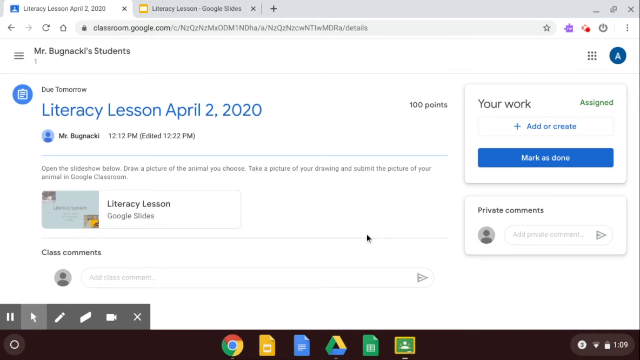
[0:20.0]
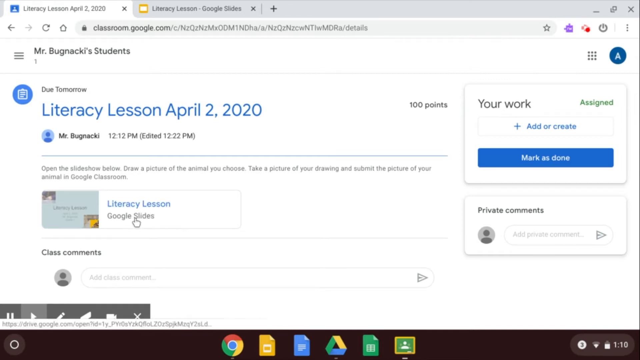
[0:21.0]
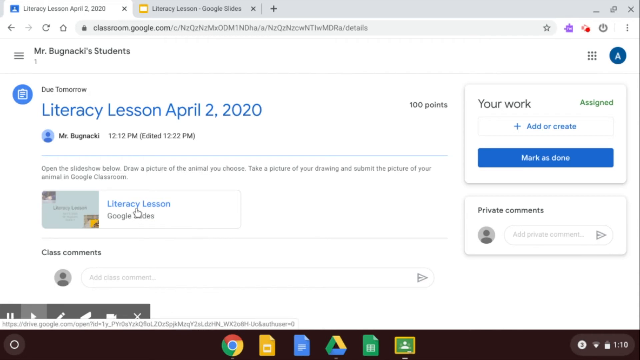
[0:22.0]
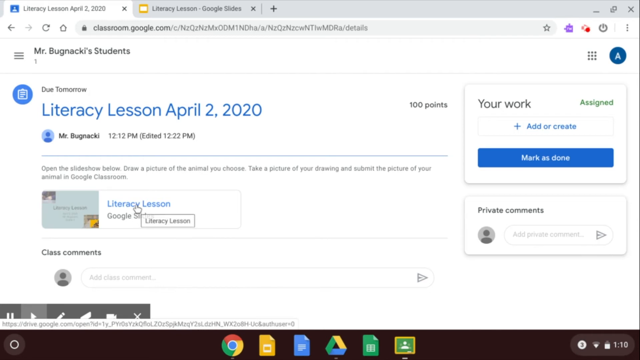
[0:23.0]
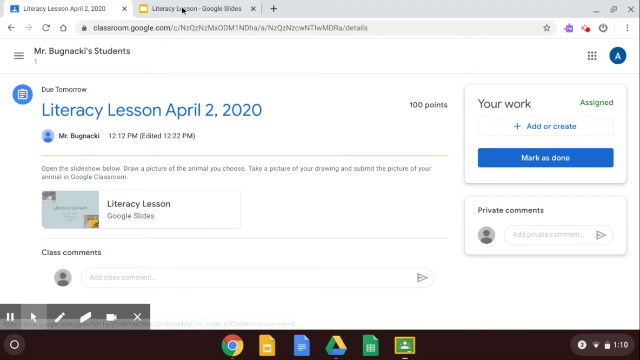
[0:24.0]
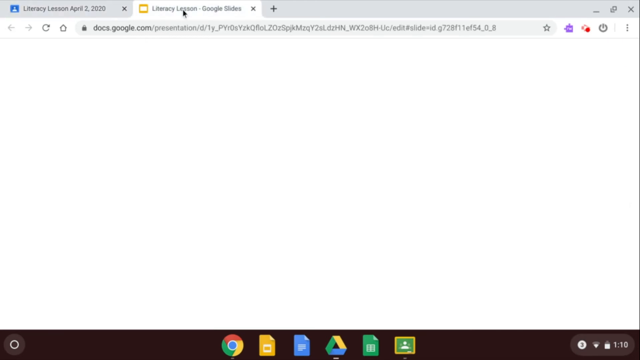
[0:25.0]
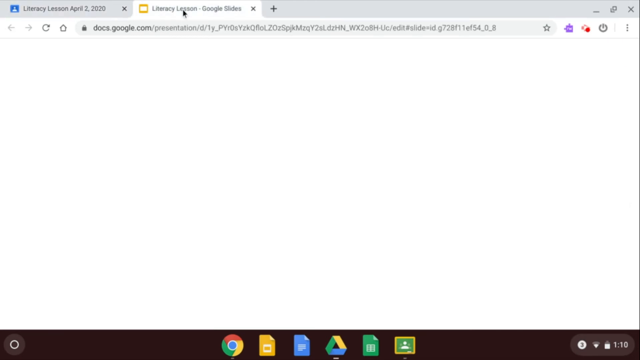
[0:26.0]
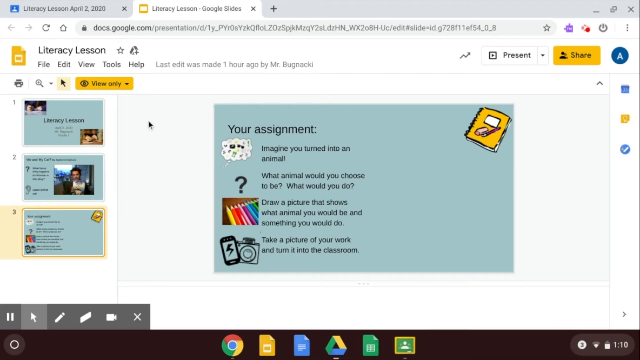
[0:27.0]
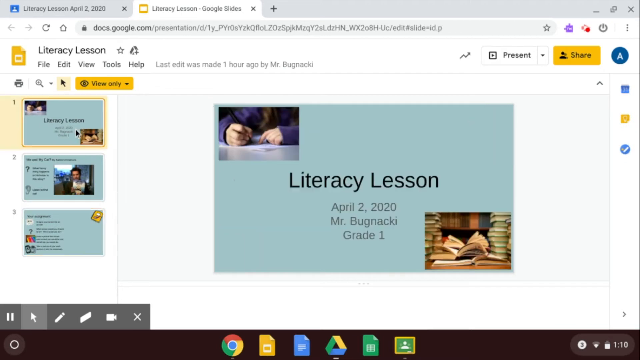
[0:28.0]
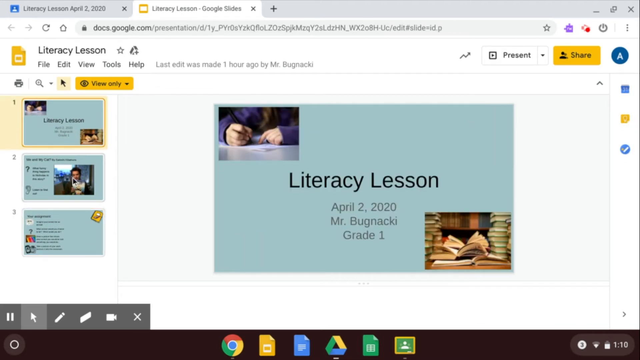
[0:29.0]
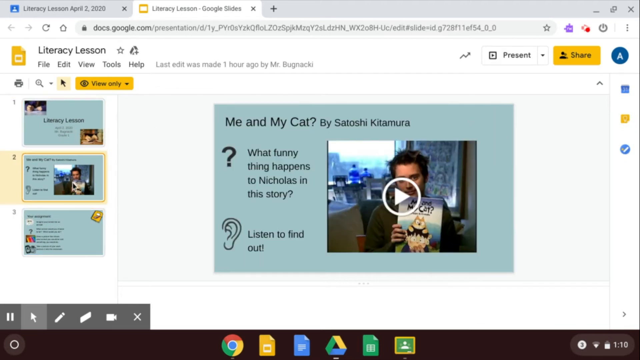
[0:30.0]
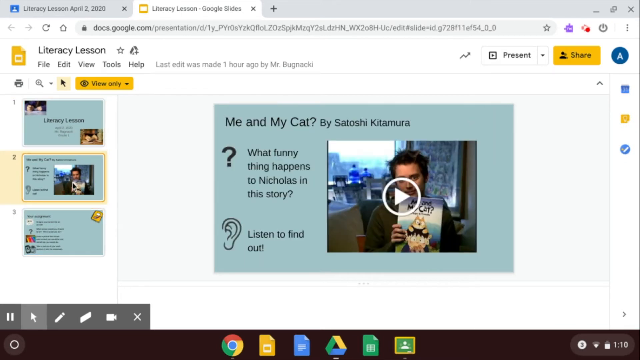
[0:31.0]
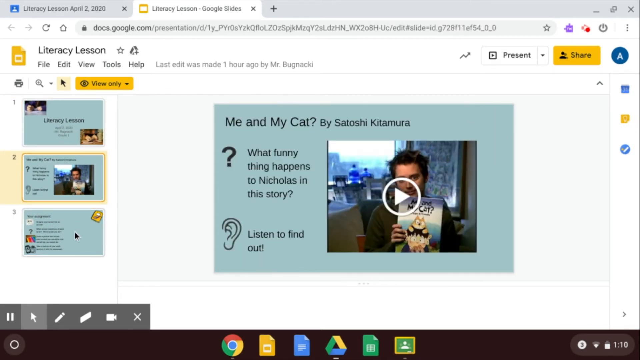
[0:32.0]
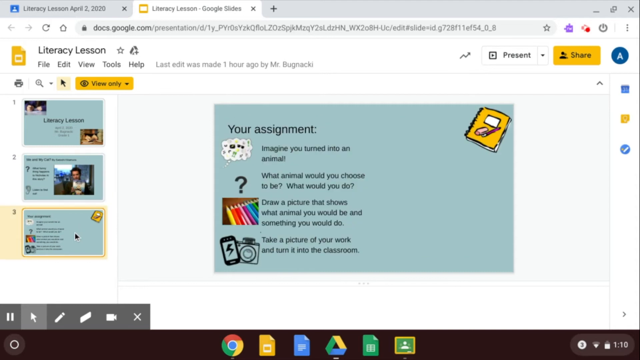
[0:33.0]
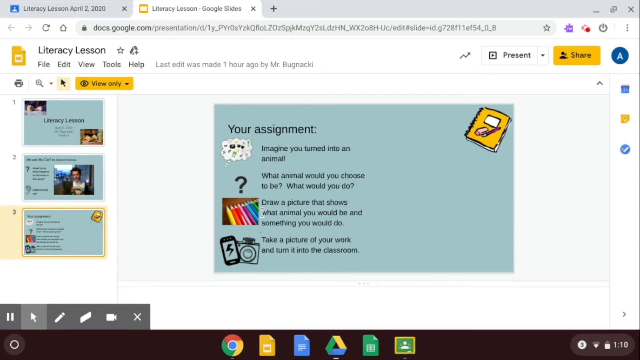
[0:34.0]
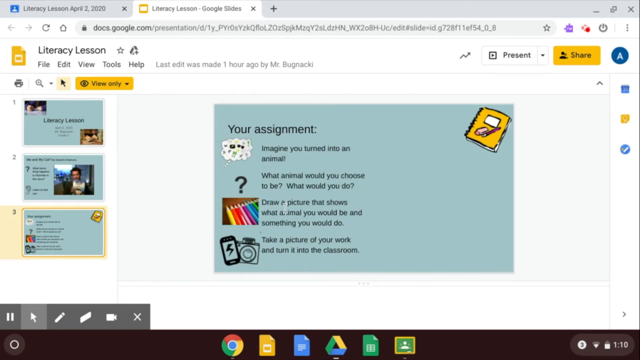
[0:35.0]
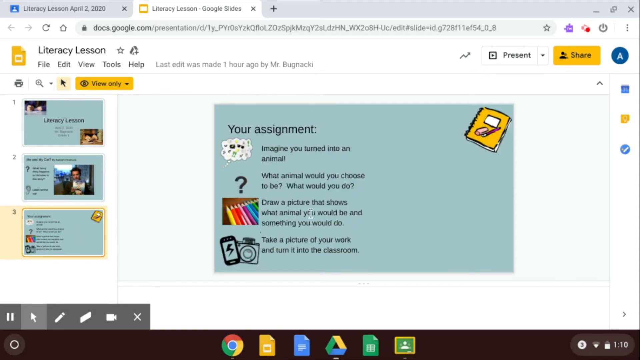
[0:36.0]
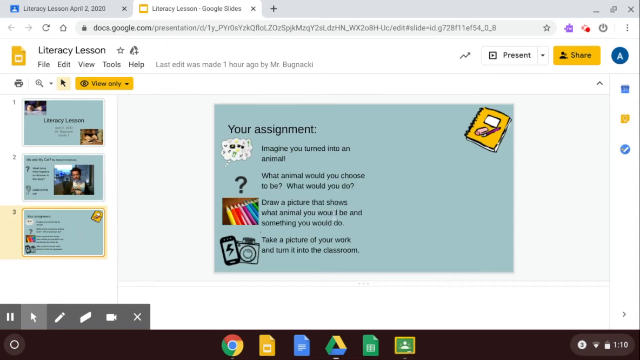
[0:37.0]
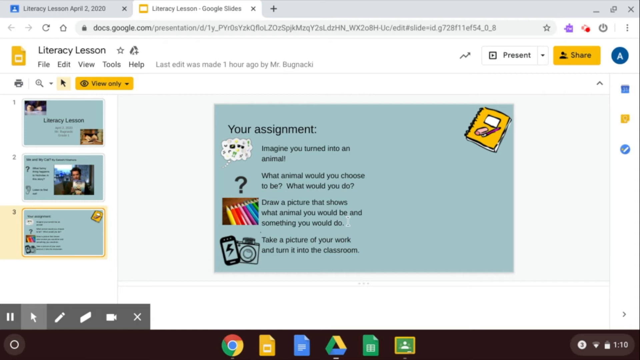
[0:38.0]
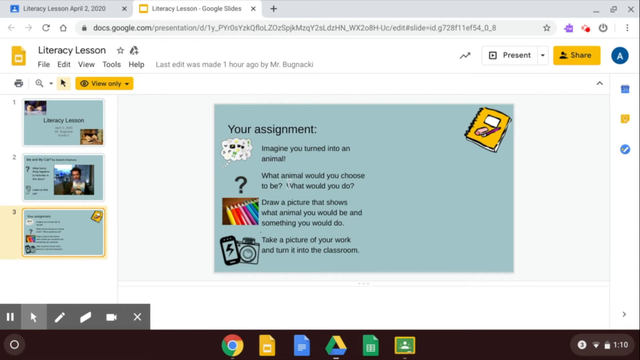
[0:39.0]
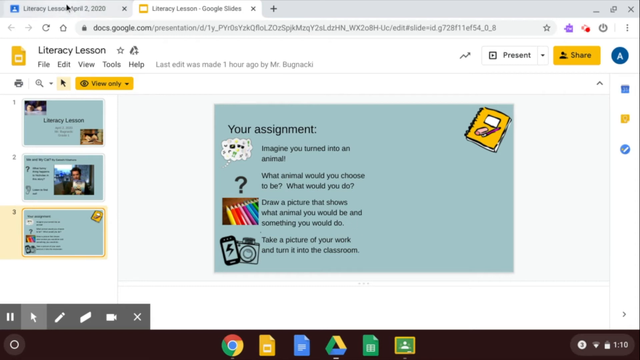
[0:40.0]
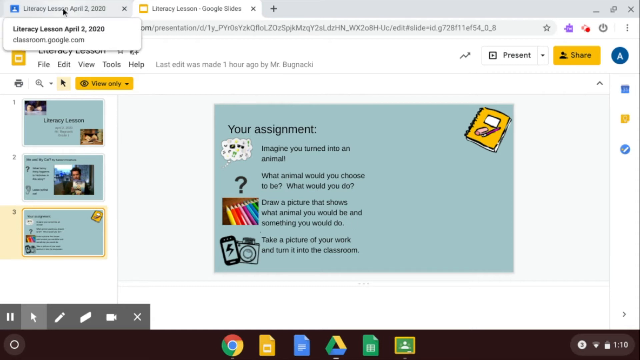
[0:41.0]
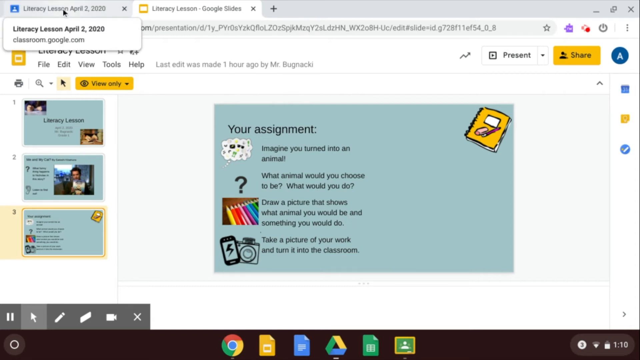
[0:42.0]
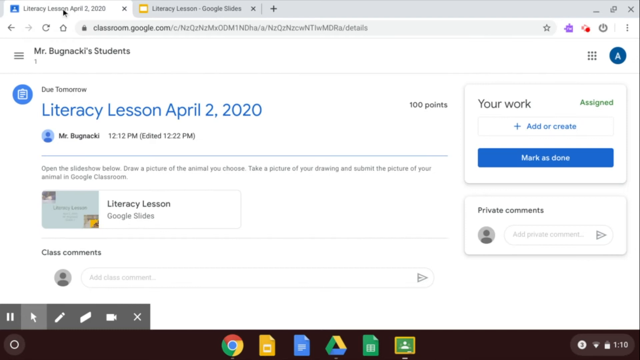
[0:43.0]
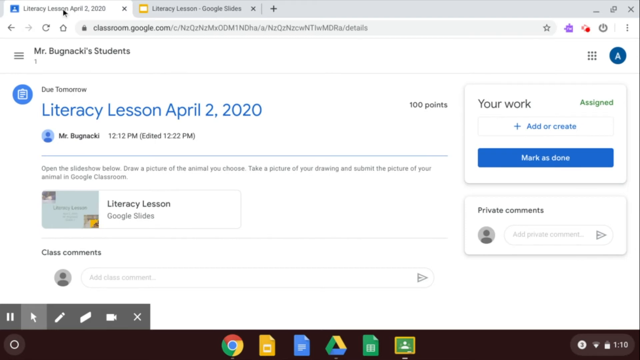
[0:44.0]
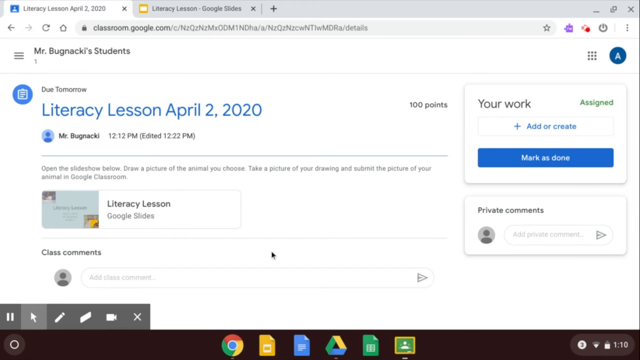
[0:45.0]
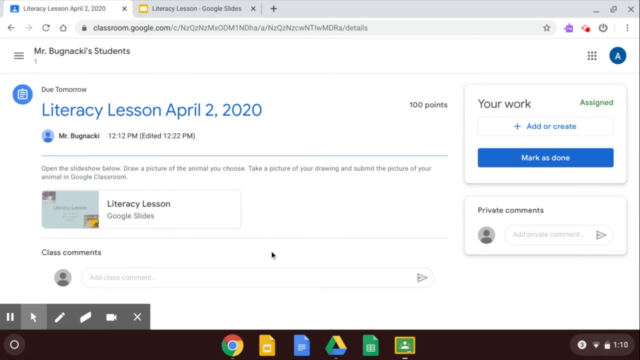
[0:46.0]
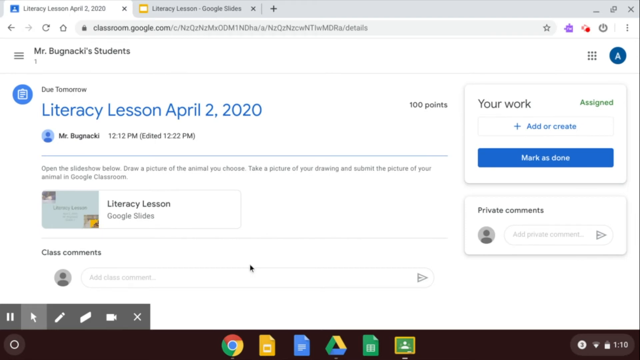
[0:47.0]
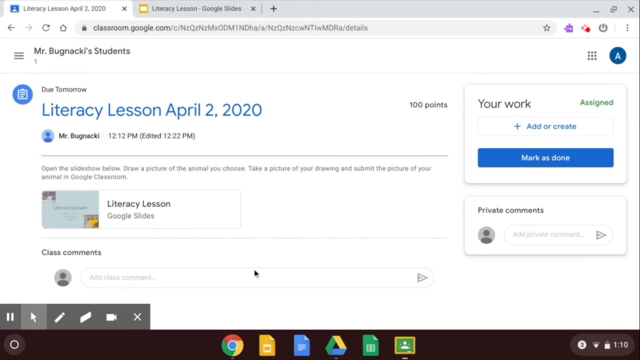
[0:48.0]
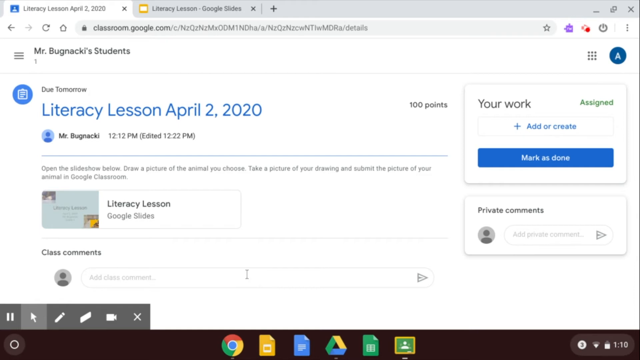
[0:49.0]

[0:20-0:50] The demonstration of a Google Chromebook continues as the demonstrator goes to the Google homepage and searches for an assignment. The assignment reads "Mr. Bukunaki's students" in black, and the demonstrator clicks a blue link that says "Literacy Lesson April 2, 2020." Below it are the words "Mr. Bukunaki" in black, with a time stamp of "12.12pm" next to them. On the right side of the page are the words "1000 points." On the far right are the words "your work" in black, with the word "assigned" in green next to them. Below that is a tab with a plus sign and "add or create" in blue. Below that is a blue tab reading "Mark is done" in white, and below that a white tab reading "private comments," along with a little circle with a human head, an arrow, and the words "add your comments."